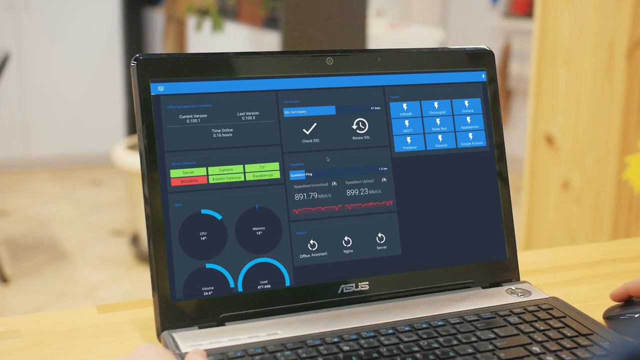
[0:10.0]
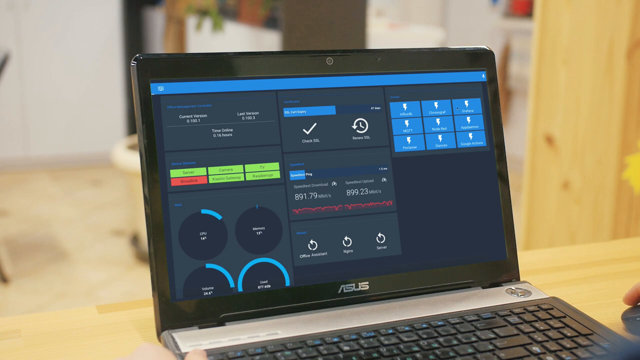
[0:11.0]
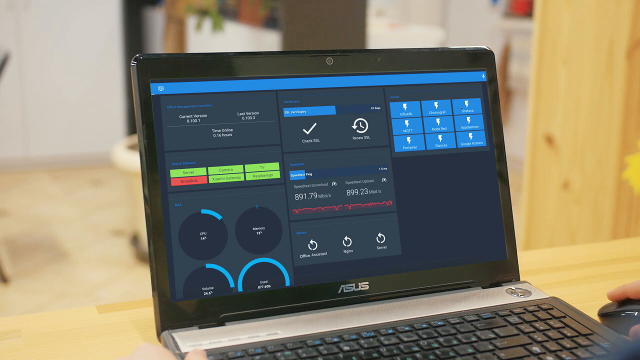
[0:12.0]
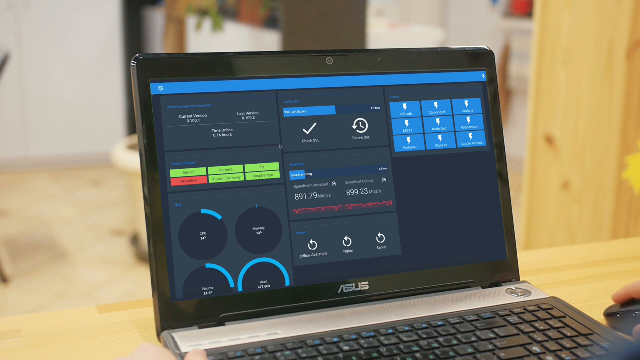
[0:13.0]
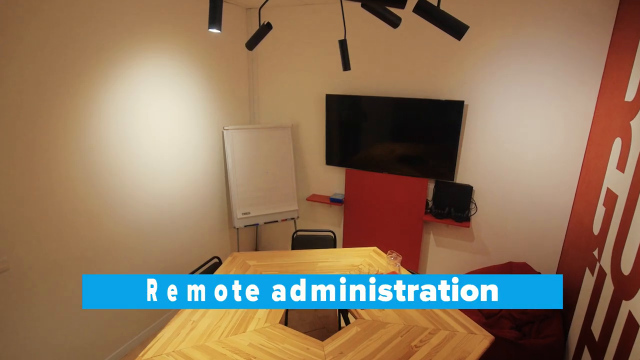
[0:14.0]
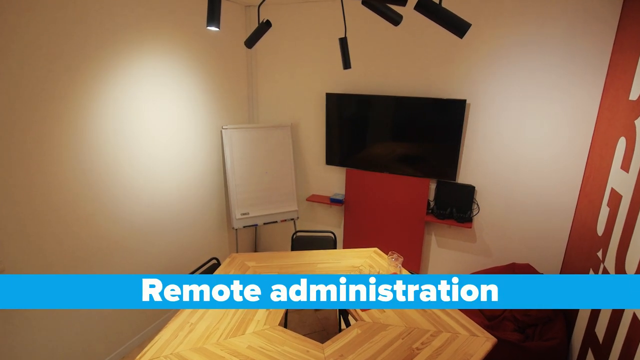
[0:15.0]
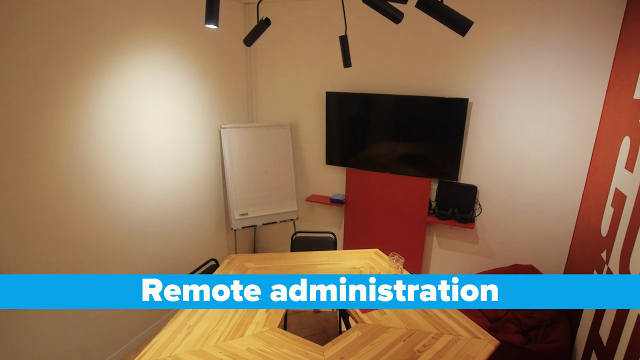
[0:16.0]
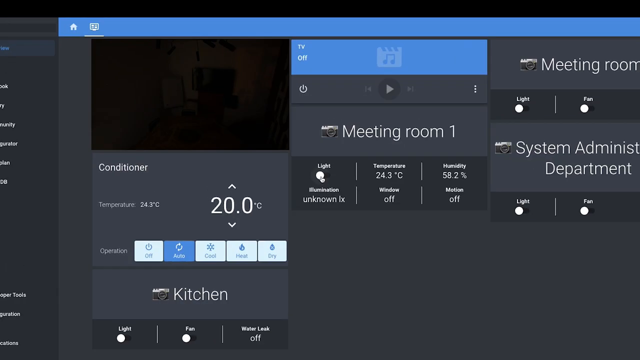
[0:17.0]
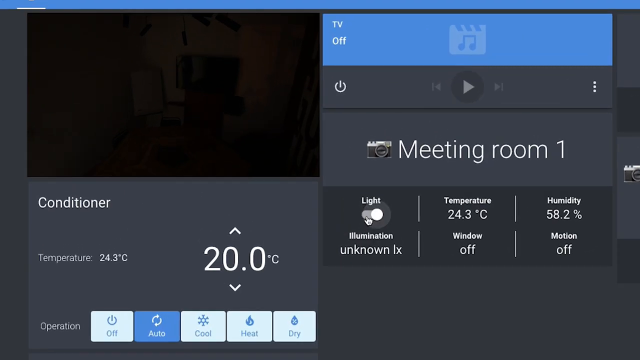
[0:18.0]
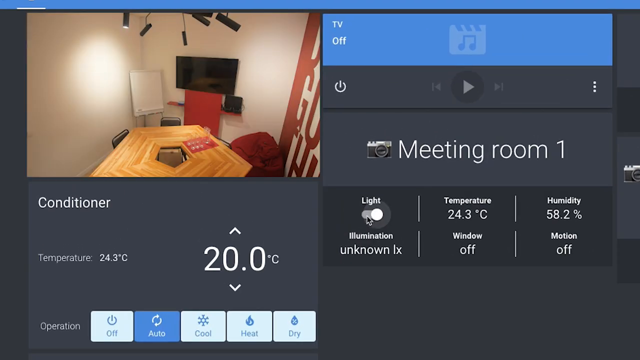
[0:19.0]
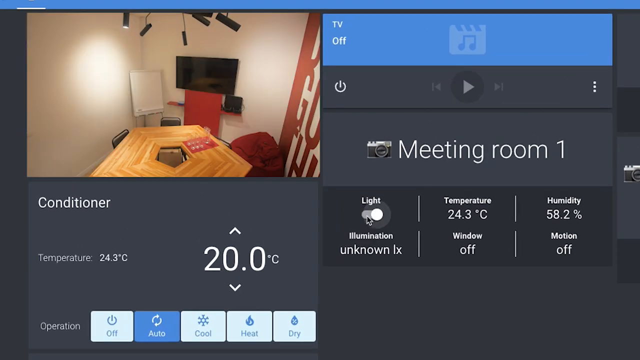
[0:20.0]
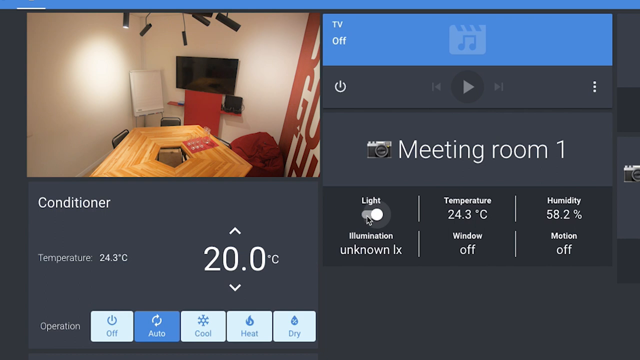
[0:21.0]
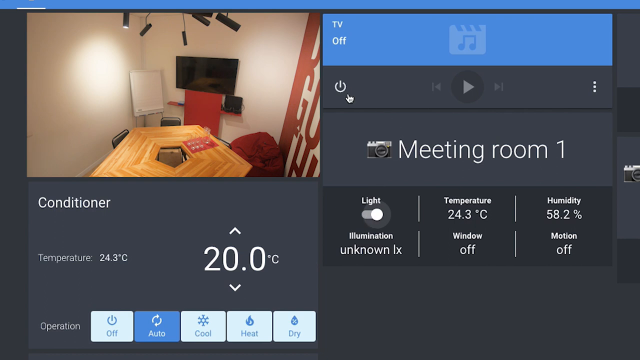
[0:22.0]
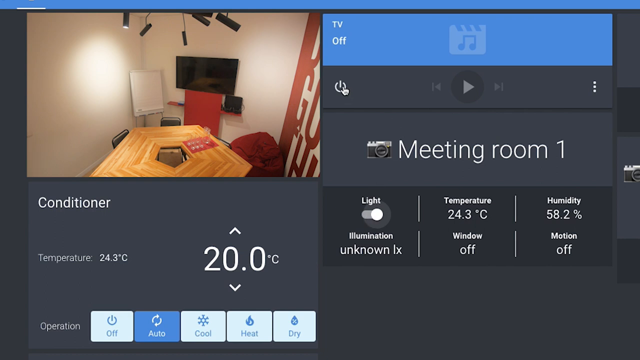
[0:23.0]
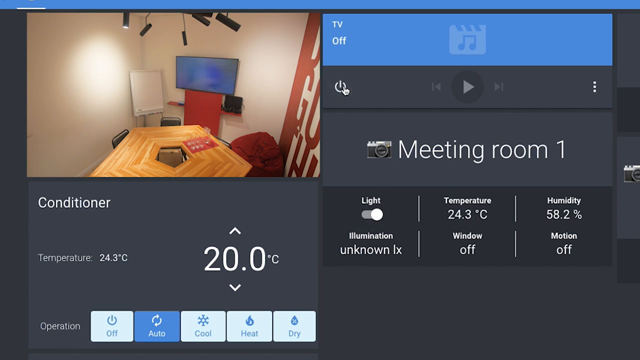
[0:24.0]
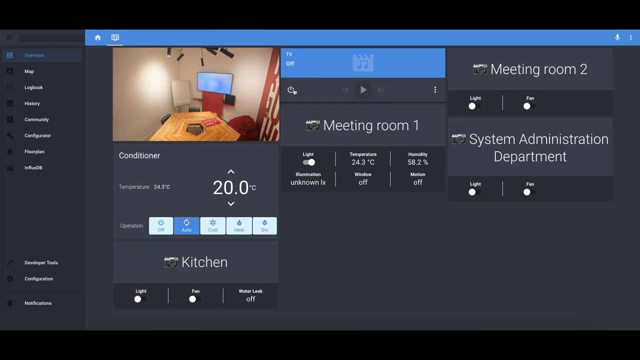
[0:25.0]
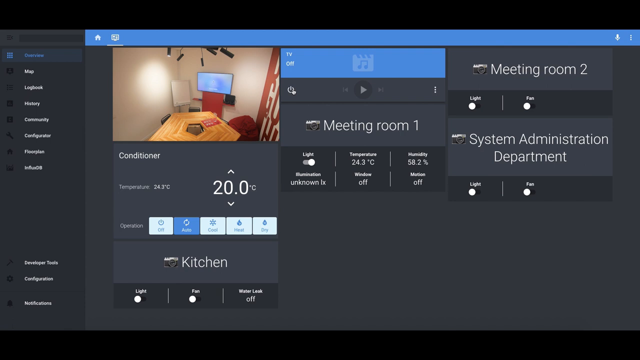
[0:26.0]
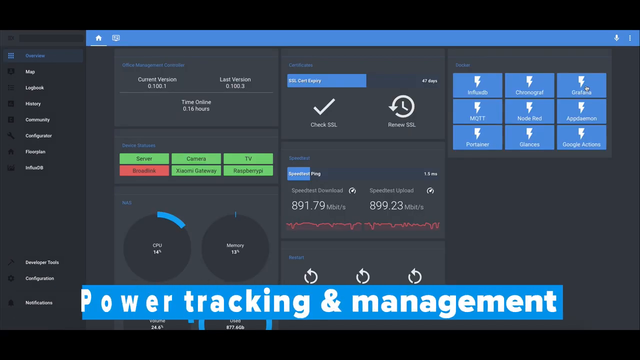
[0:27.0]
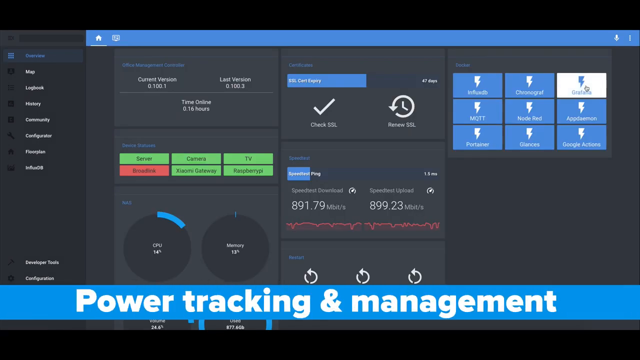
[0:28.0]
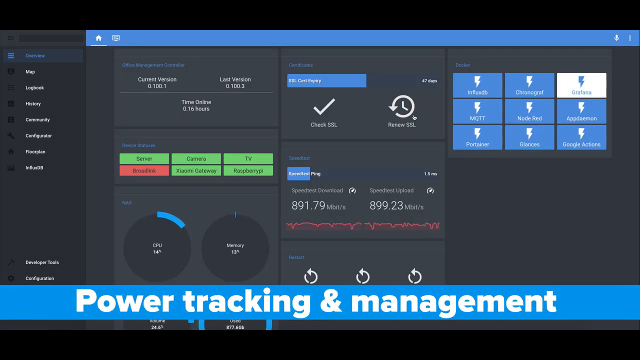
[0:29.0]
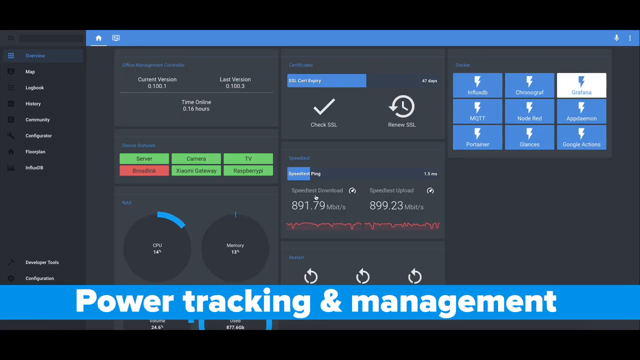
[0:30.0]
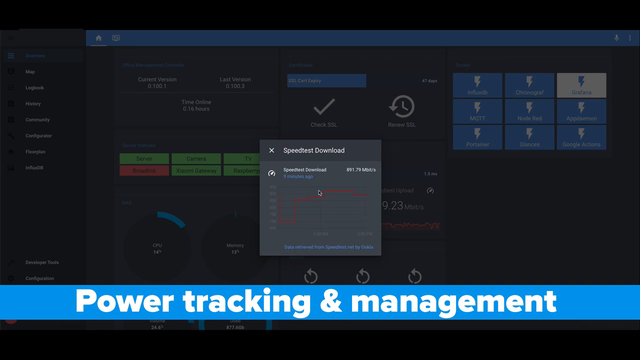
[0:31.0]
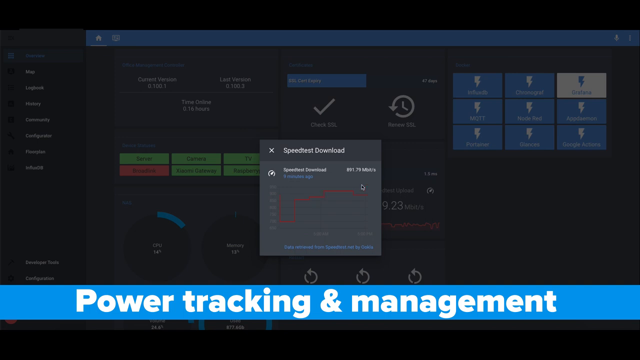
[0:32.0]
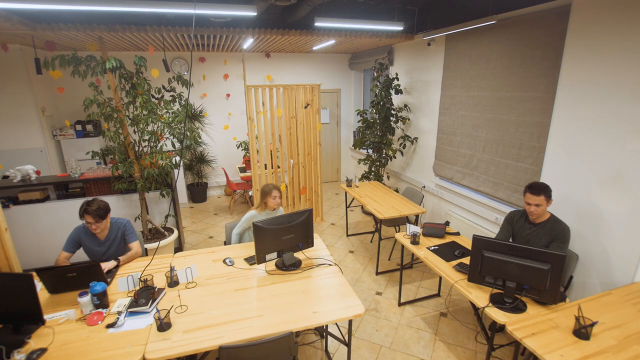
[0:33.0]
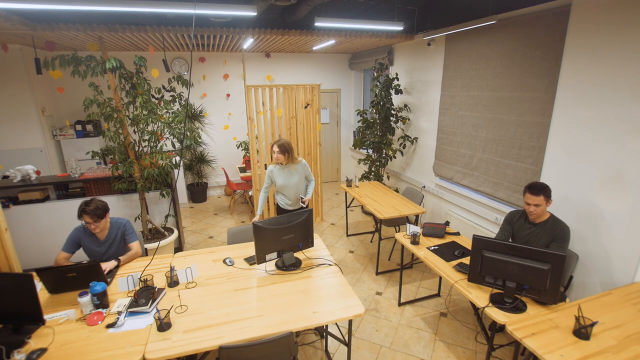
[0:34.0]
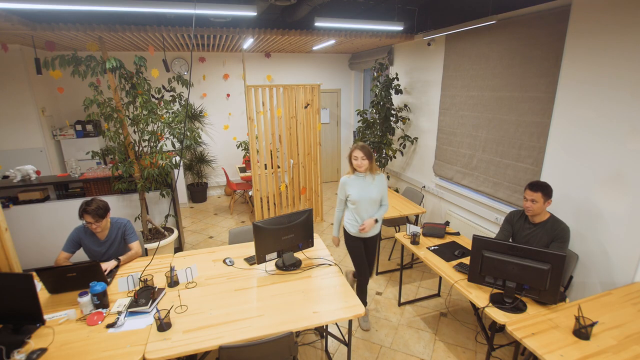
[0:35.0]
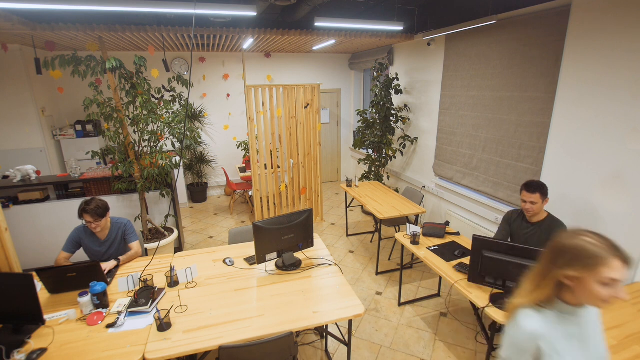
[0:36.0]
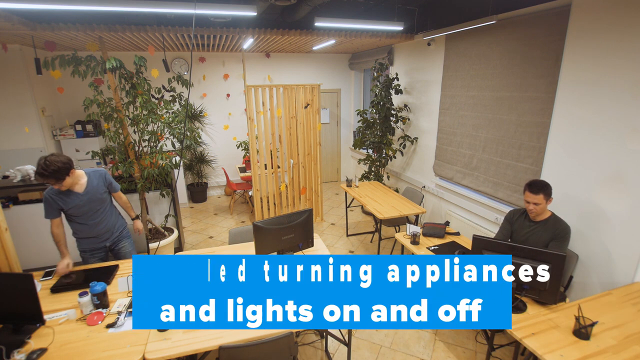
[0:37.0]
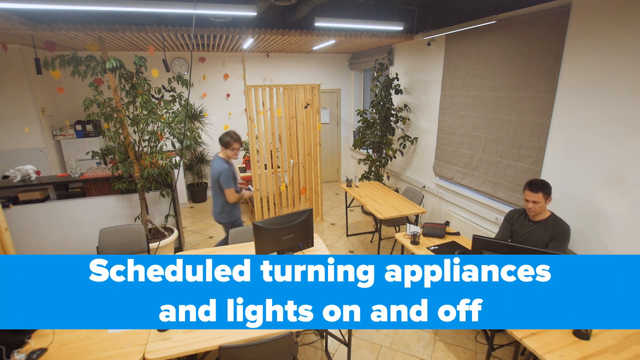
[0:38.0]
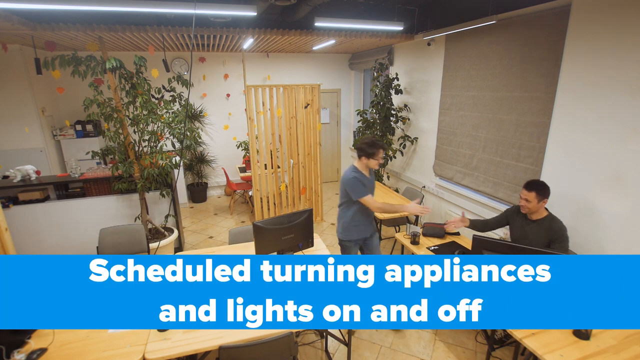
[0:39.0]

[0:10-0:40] The view is now just of the laptop, as if seen from the man's left shoulder, with "ASUS" across the bottom of the screen. Some kind of control panel is displayed, with several pie charts in the lower left. The screen changes to a photograph of the inside of a room, with white text on a blue background at the bottom reading "remote administration." A hexagon-shaped table is in the middle of the room. The view returns to some kind of screen or dashboard labeled "Meeting room 1," where someone appears to click a toggle button labeled "light and illumination." On the left side of the screen is an image of the same room seen earlier, and a light now appears to be on, shining on the left wall. Next, a power button for the TV is clicked, and the TV turns on.